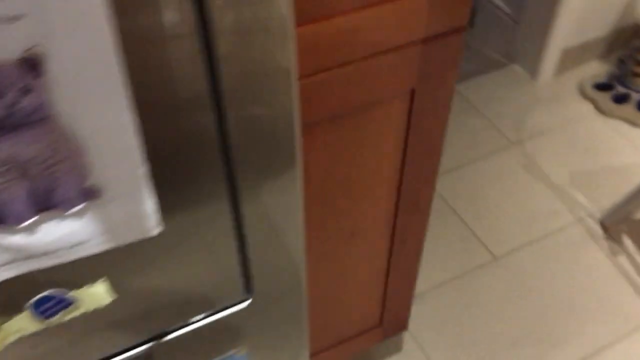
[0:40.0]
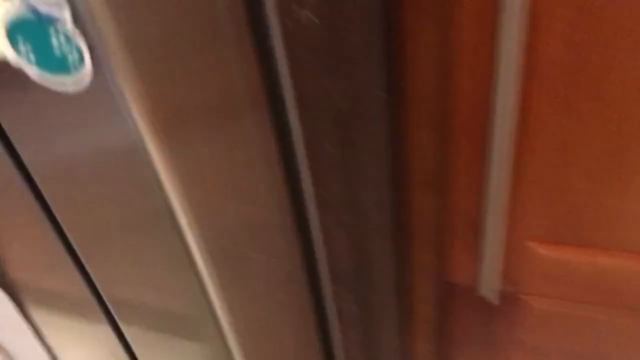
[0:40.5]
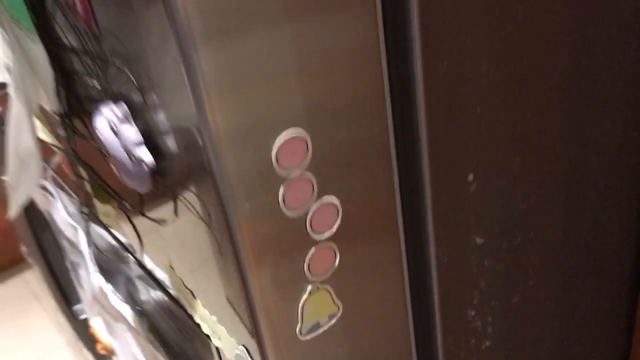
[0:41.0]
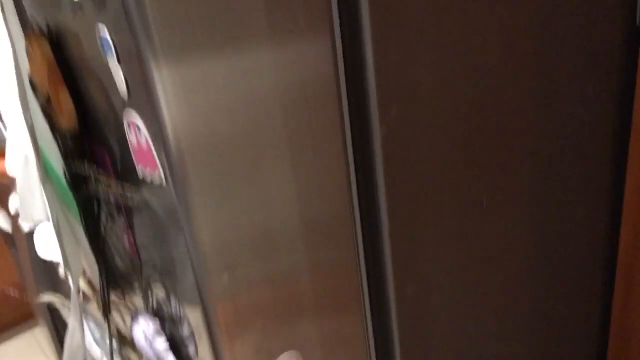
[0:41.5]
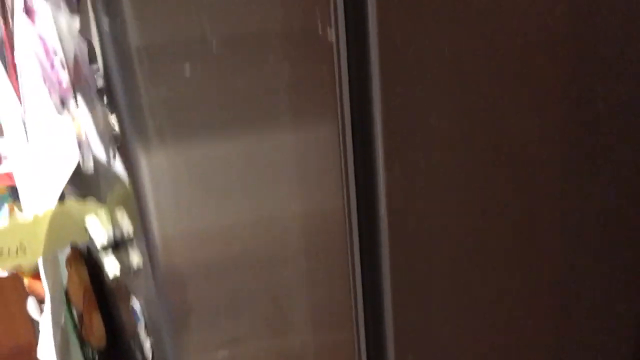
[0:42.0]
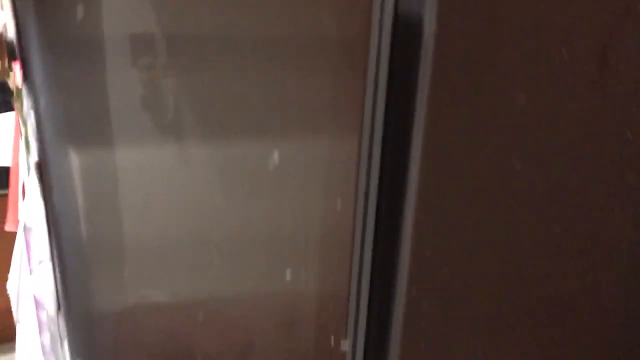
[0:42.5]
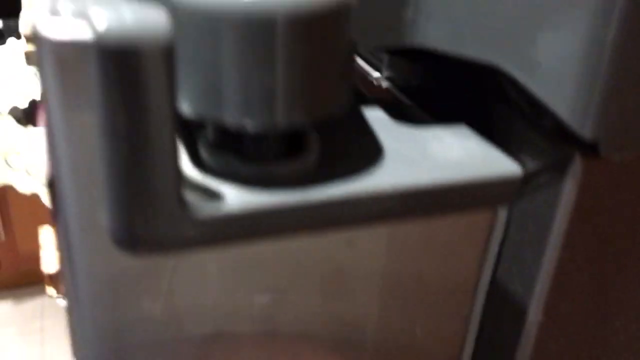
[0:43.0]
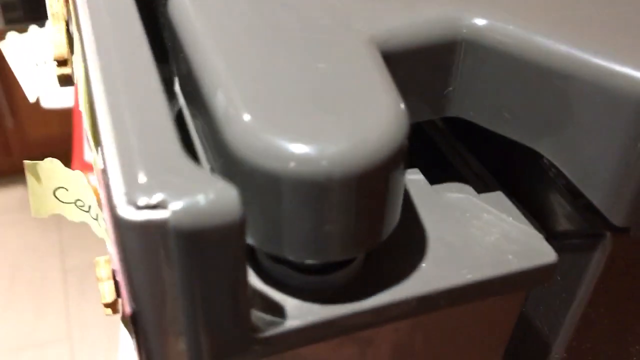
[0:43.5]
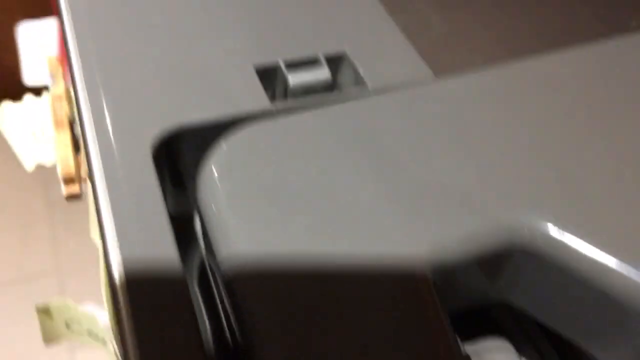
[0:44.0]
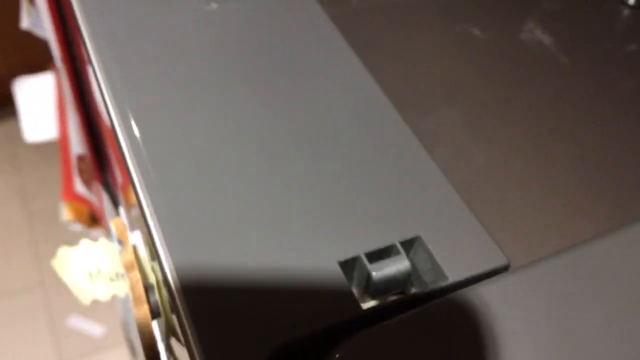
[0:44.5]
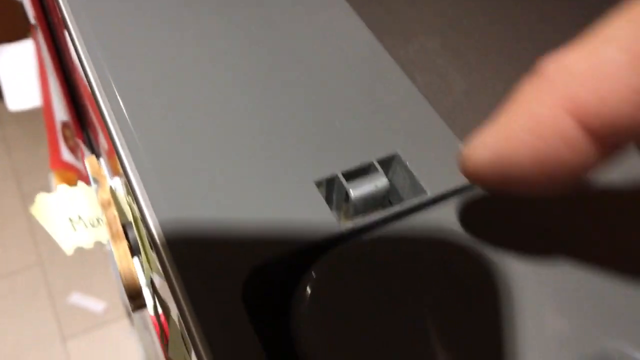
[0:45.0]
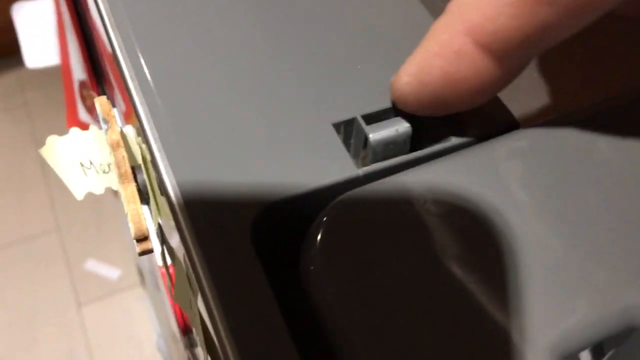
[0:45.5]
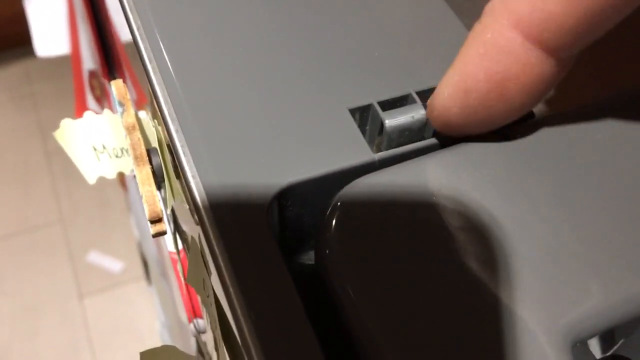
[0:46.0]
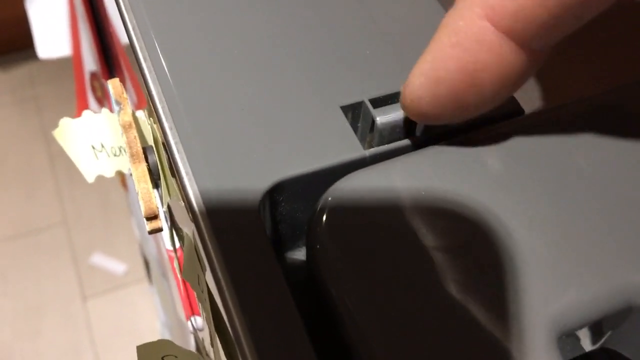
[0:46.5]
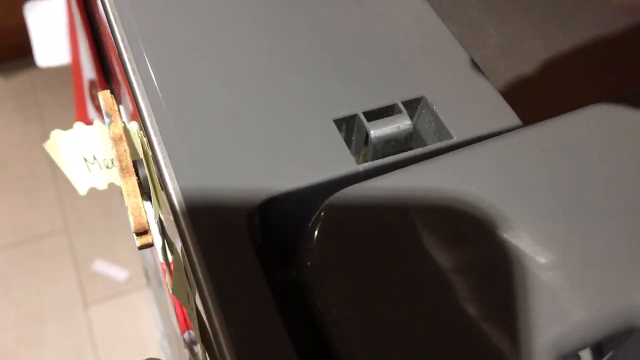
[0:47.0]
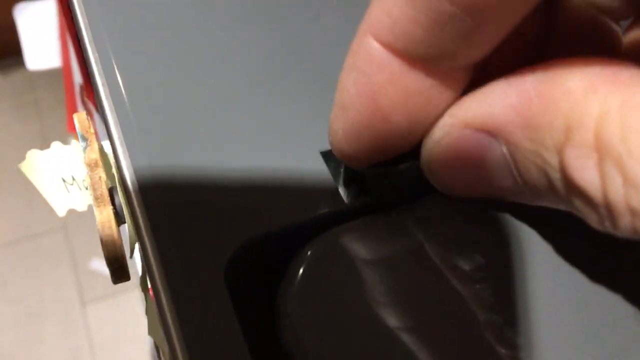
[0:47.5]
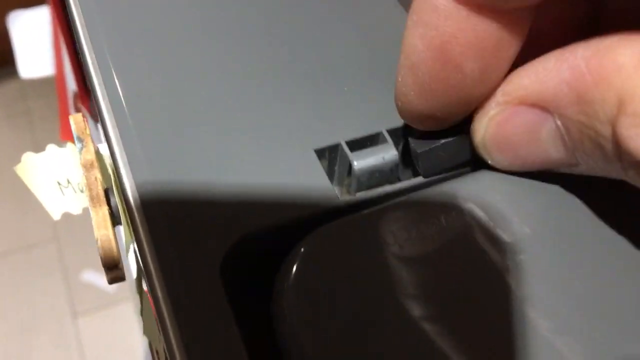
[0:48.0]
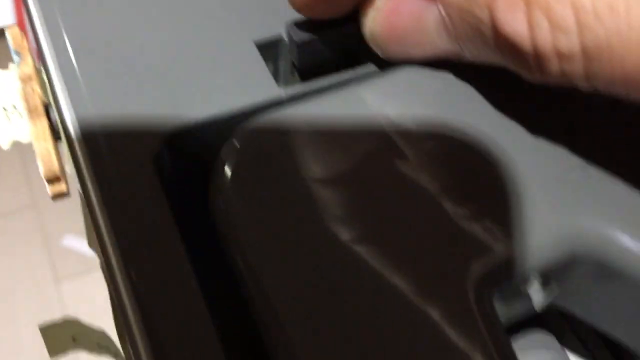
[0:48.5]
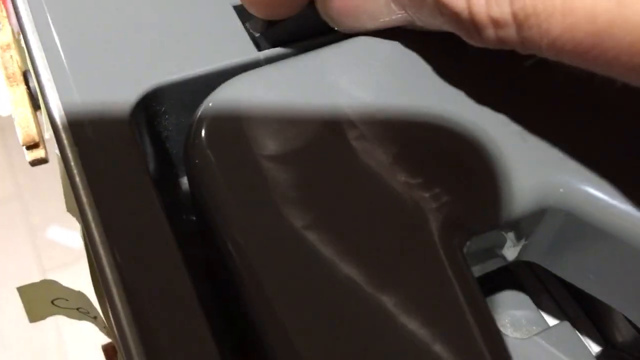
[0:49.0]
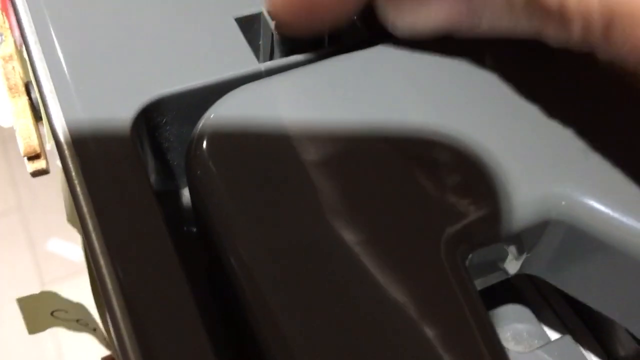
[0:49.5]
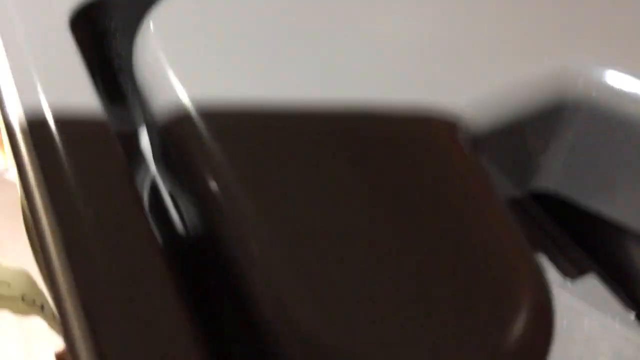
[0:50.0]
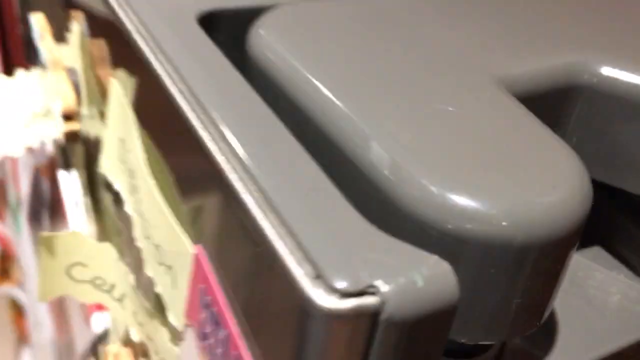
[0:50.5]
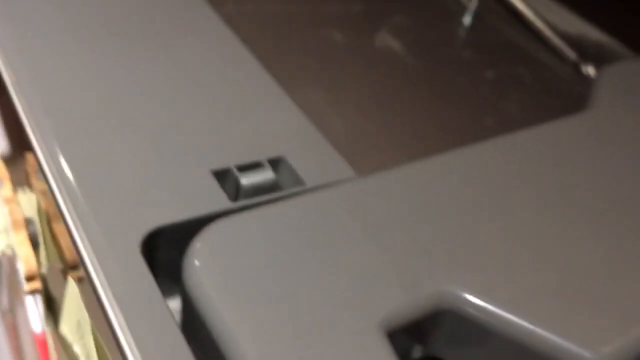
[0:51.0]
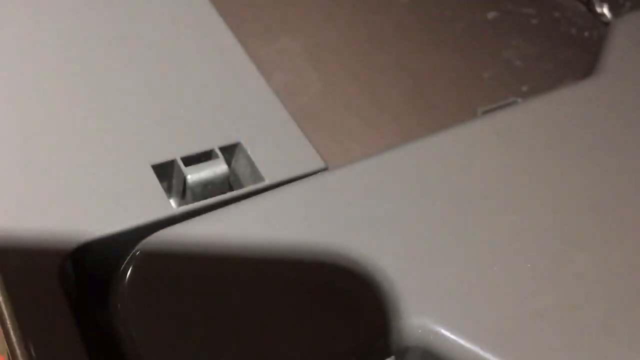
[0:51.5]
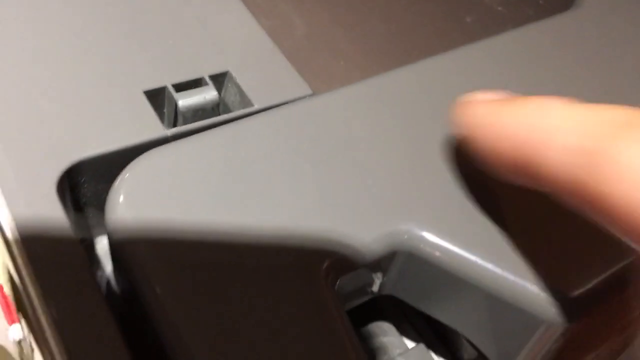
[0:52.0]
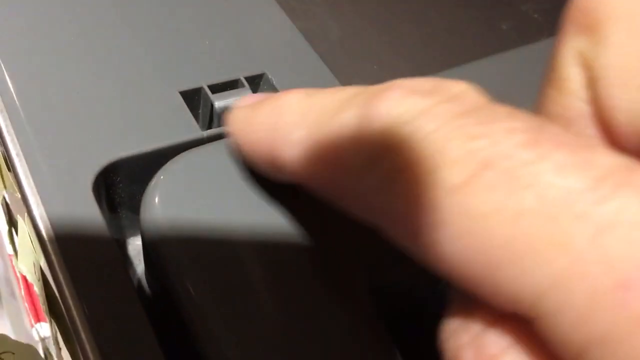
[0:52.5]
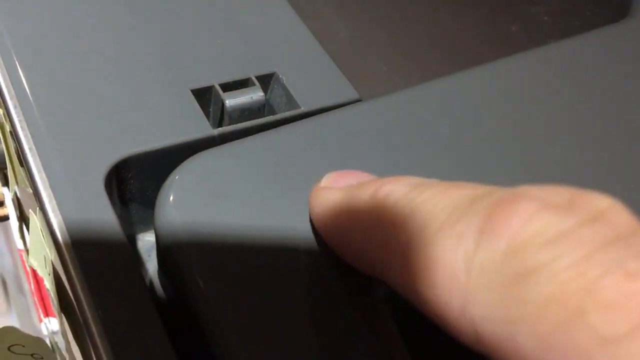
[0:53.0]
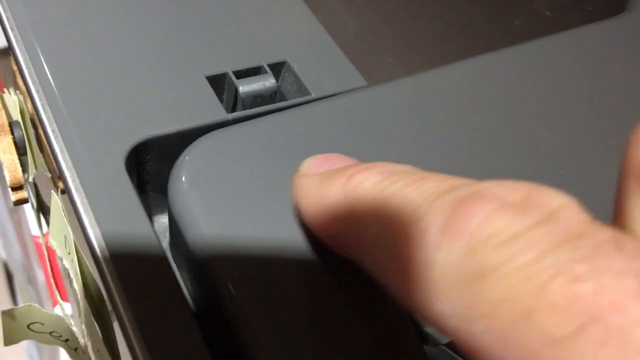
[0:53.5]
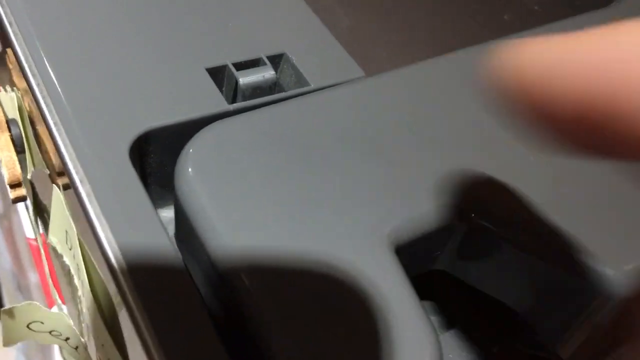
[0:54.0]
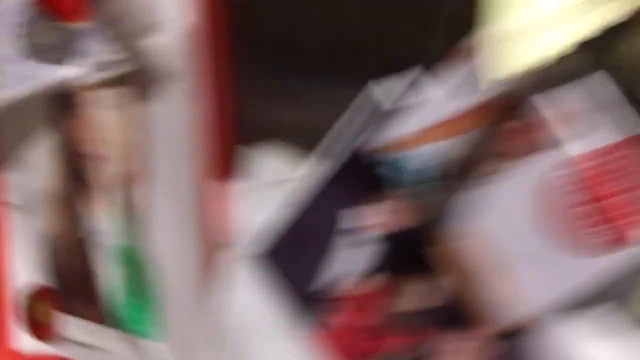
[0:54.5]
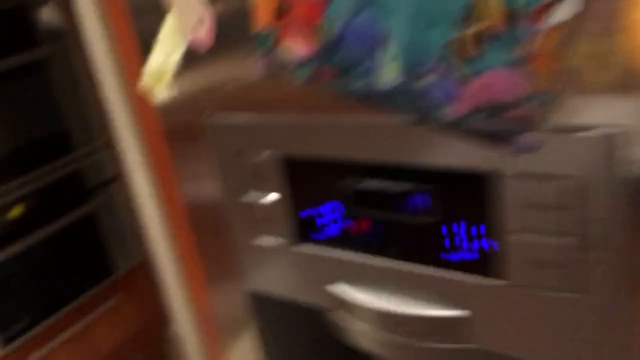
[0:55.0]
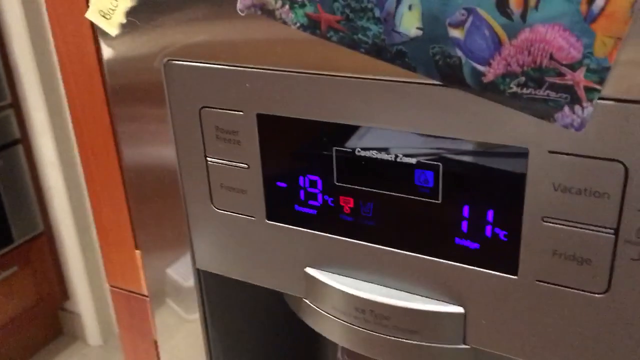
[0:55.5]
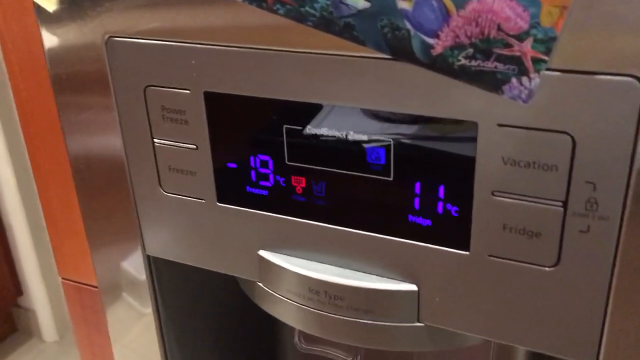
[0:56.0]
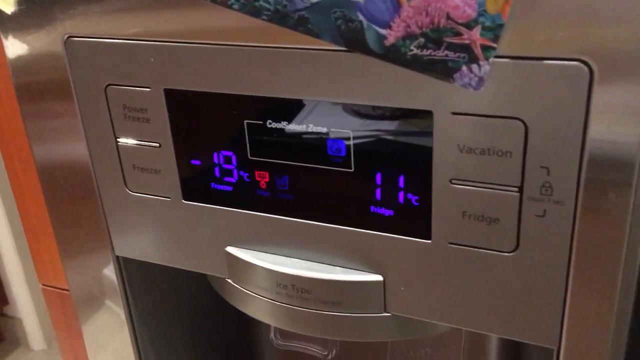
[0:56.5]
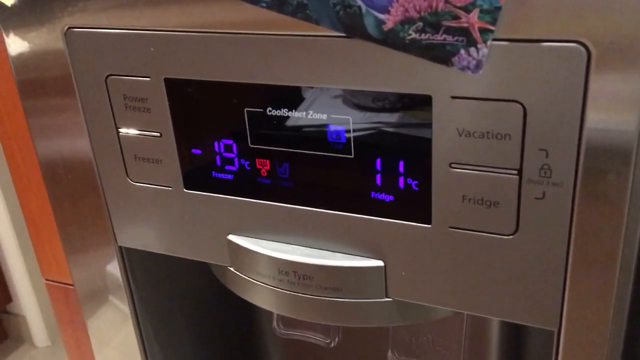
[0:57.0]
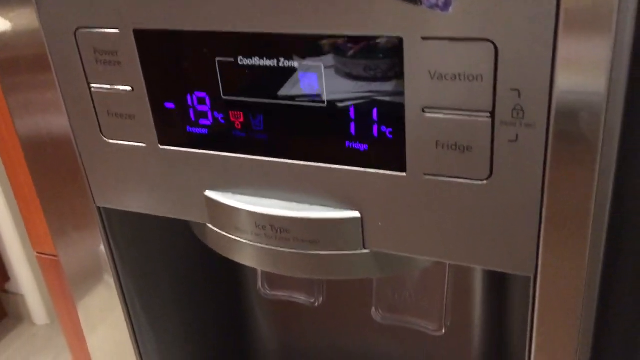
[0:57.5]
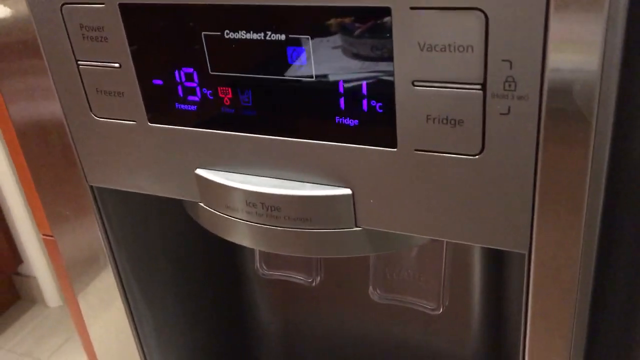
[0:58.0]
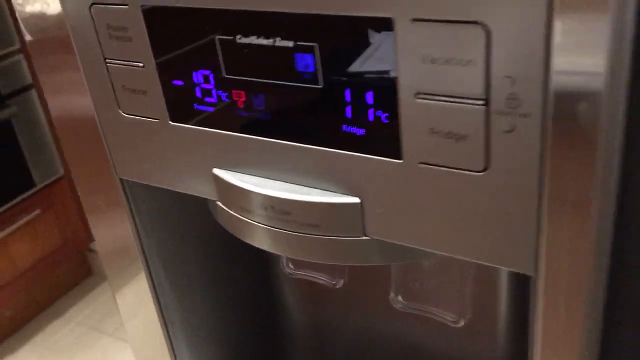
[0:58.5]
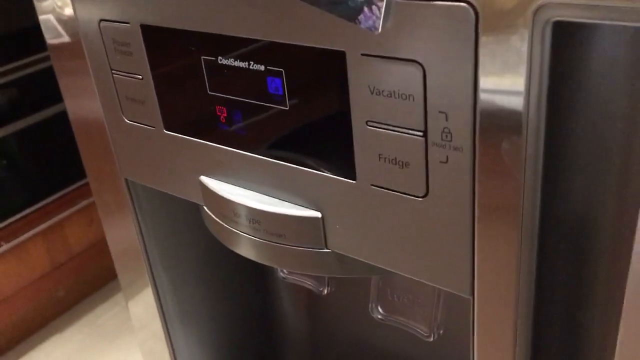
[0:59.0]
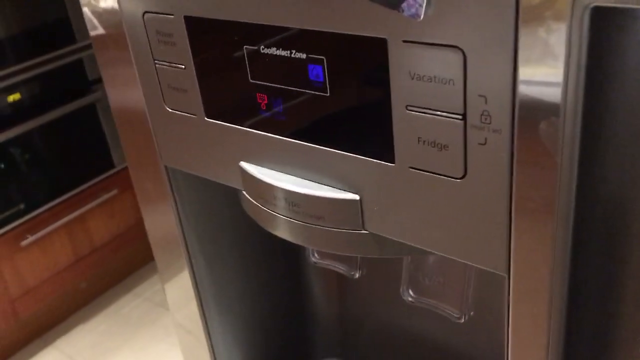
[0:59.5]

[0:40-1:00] The inside of a kitchen is shown in a slightly wide frame. On the left is the edge of a refrigerator, and in front are two wooden cabinets stacked on top of each other. The camera pans left and goes up the right side of the refrigerator to the very top, above it. Part of the door hinge is visible, and a finger comes in from the top and points at a small square-shaped hole in the gray plastic of the hinge, tapping it a few times. The person then puts in, or attempts to put in, a black cover for it, and wiggles the hinge, which seems a little loose. The camera pans back down to the left front door of the fridge, showing the ice maker. It has two sides, one for ice and one for water, and four buttons on the front, with blue lighting on a black background. Right at the very end, the lighting on the fridge seems to turn off.